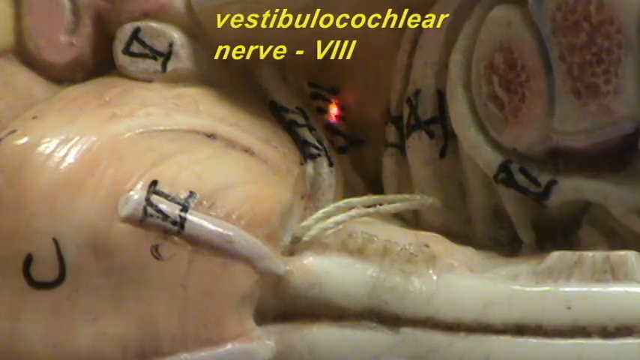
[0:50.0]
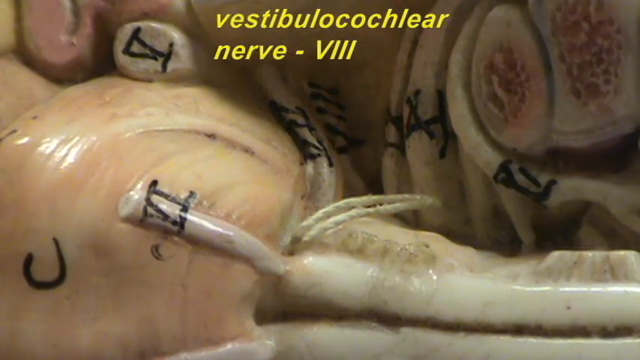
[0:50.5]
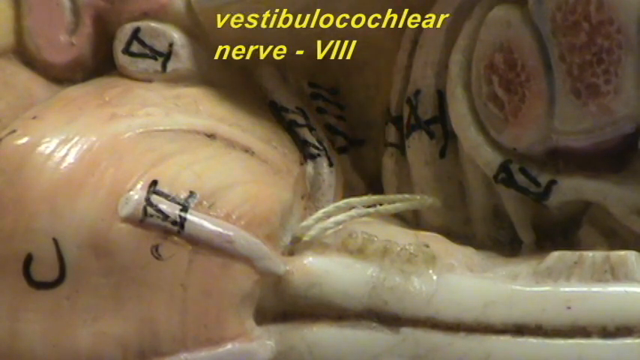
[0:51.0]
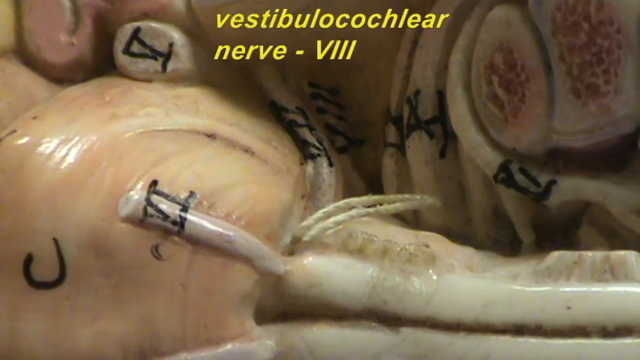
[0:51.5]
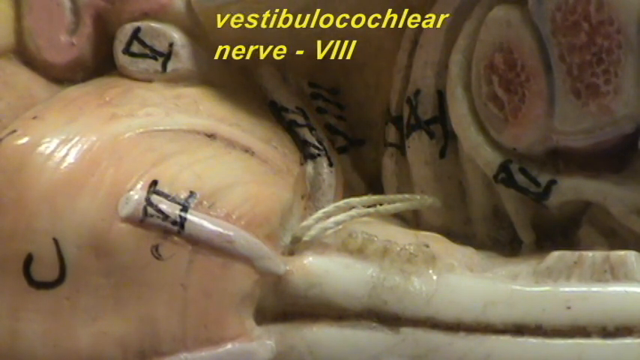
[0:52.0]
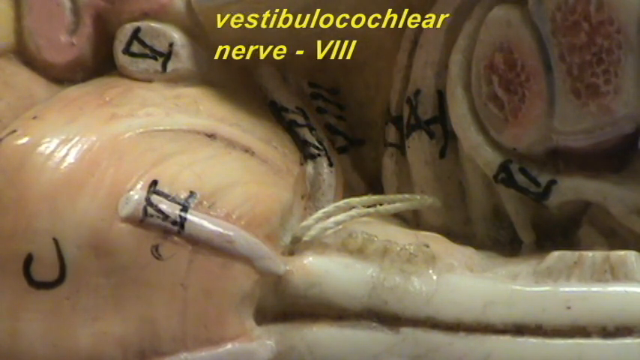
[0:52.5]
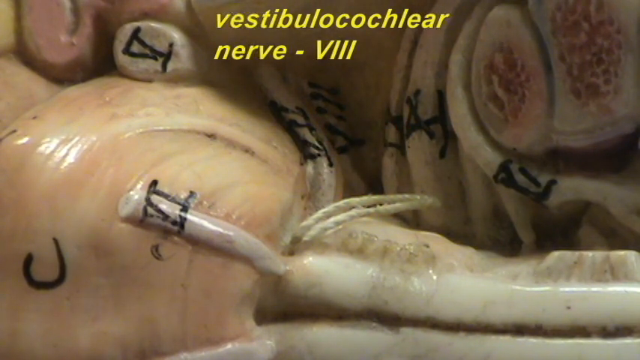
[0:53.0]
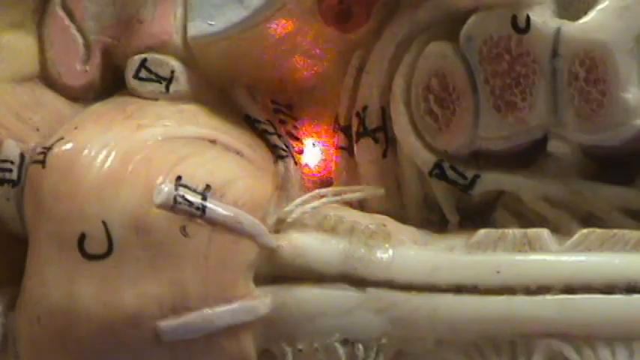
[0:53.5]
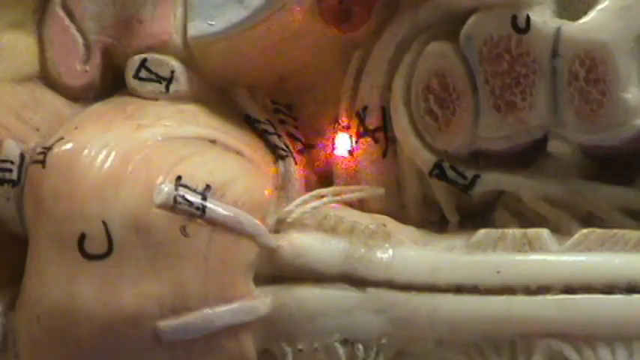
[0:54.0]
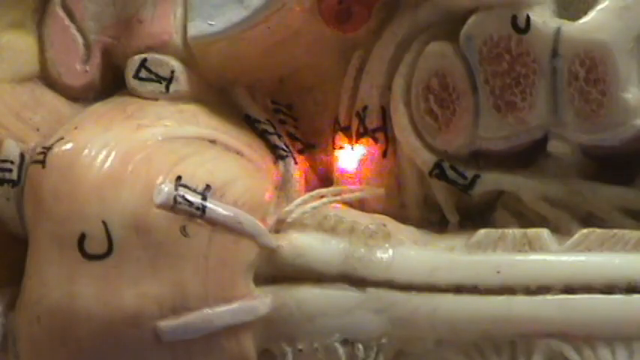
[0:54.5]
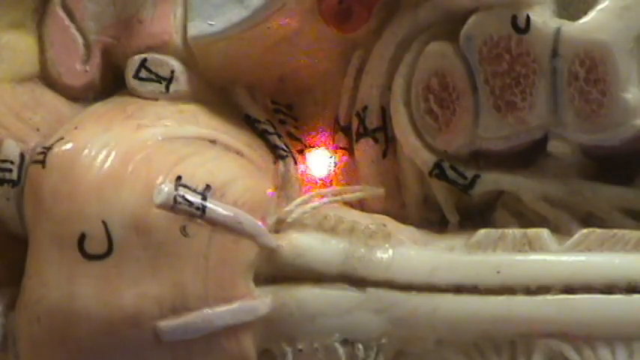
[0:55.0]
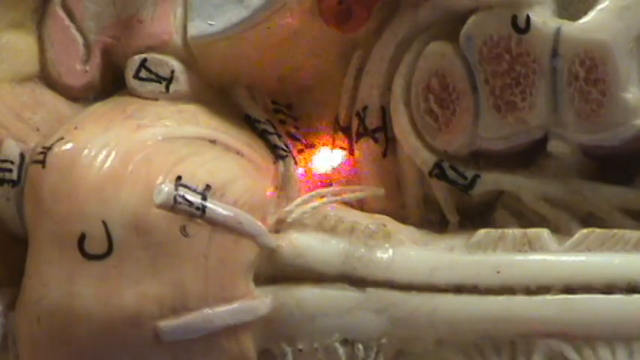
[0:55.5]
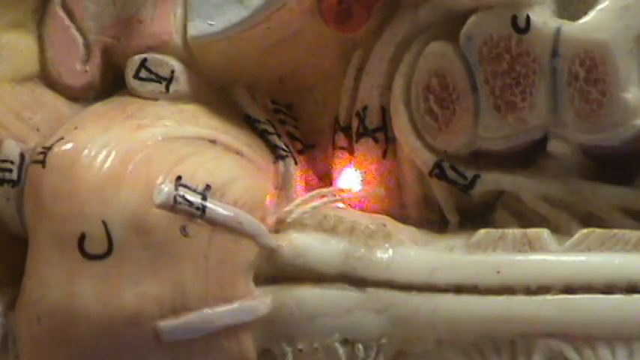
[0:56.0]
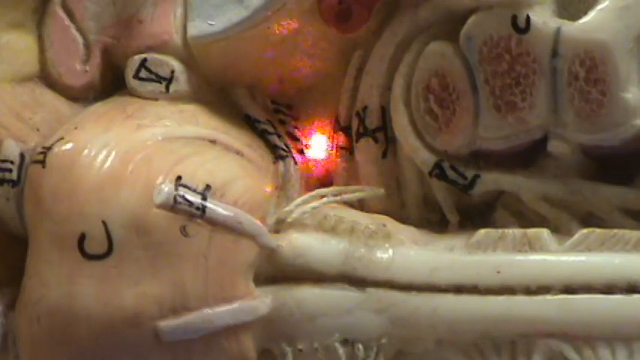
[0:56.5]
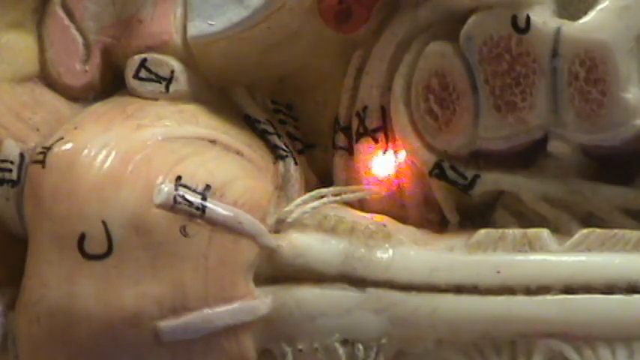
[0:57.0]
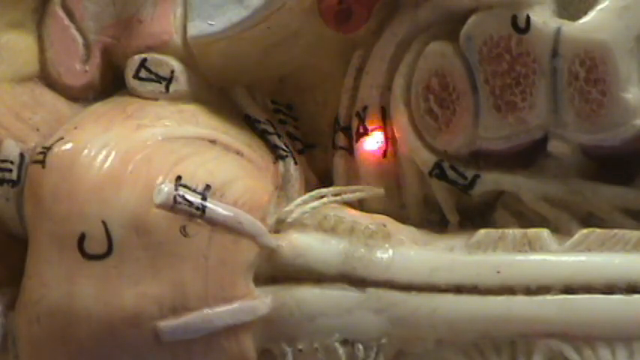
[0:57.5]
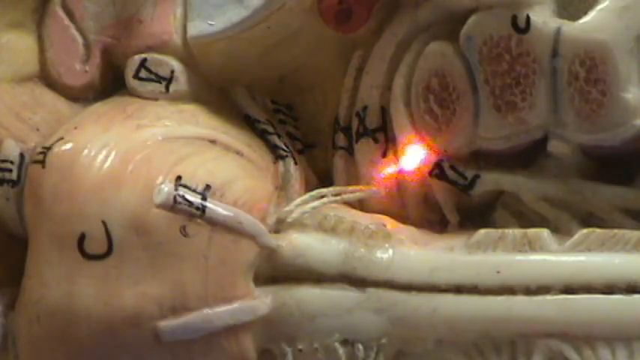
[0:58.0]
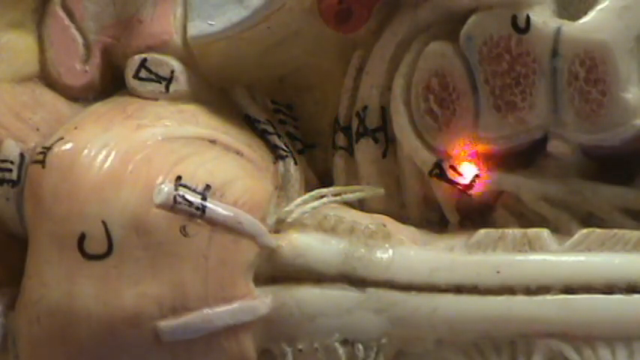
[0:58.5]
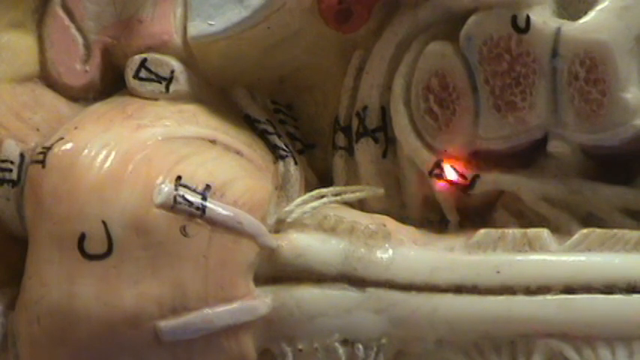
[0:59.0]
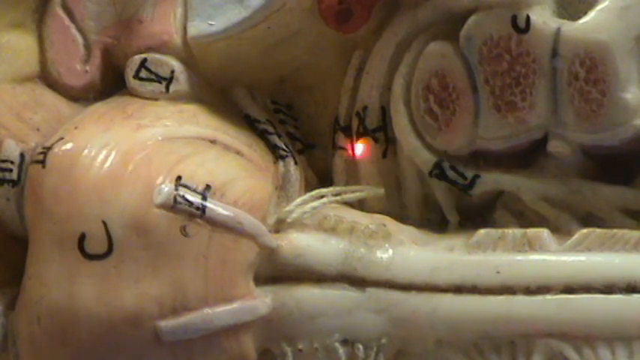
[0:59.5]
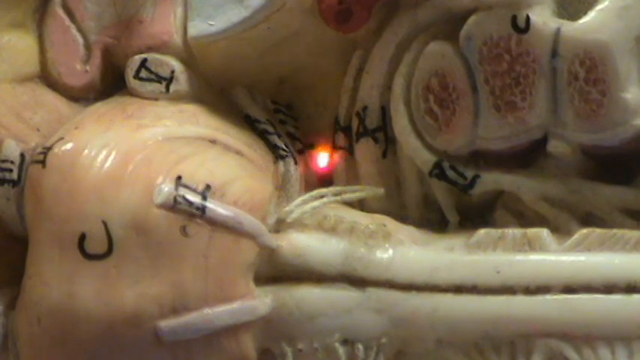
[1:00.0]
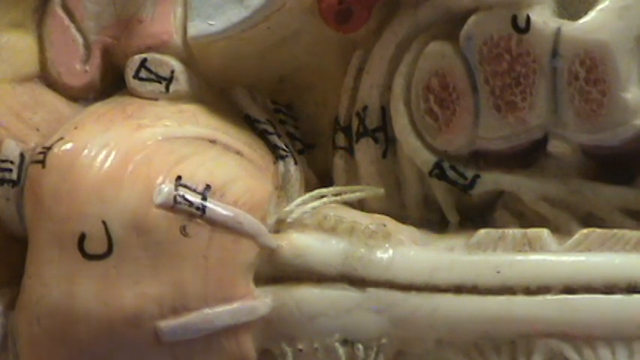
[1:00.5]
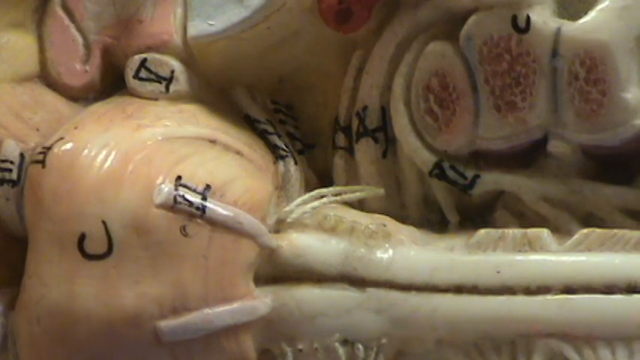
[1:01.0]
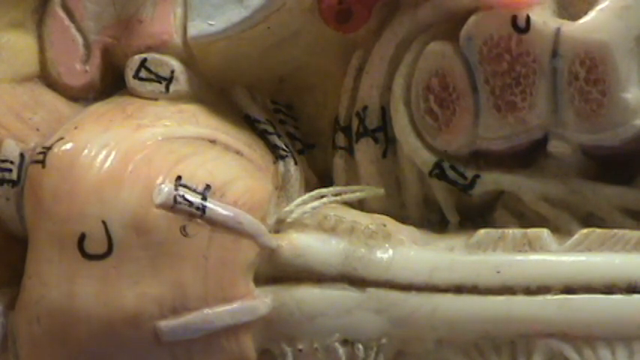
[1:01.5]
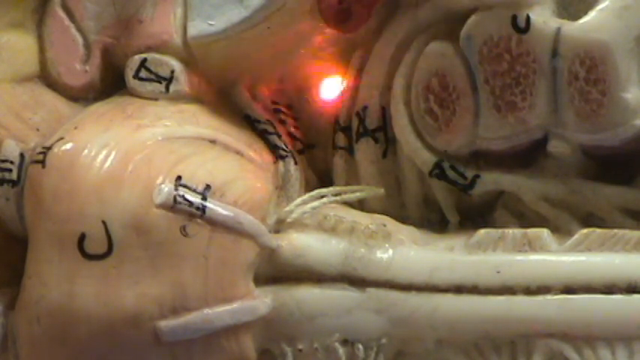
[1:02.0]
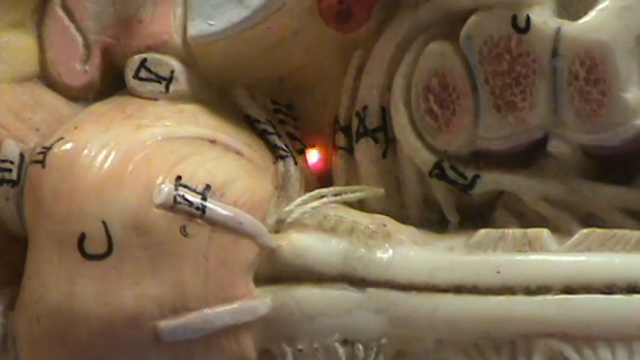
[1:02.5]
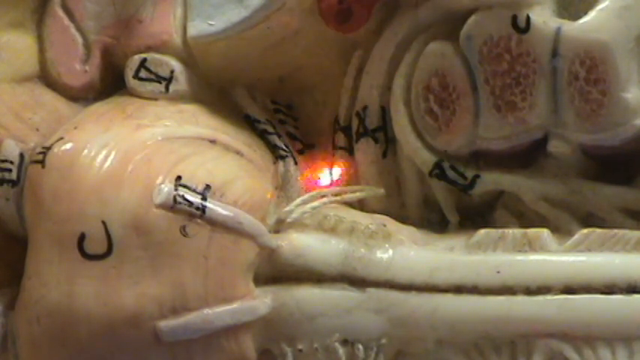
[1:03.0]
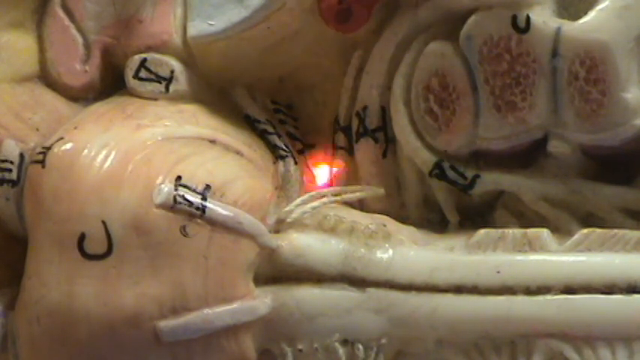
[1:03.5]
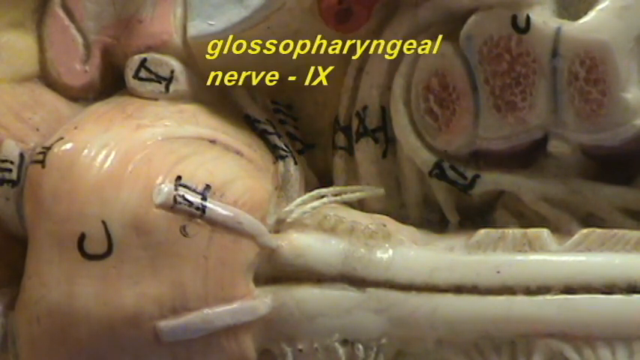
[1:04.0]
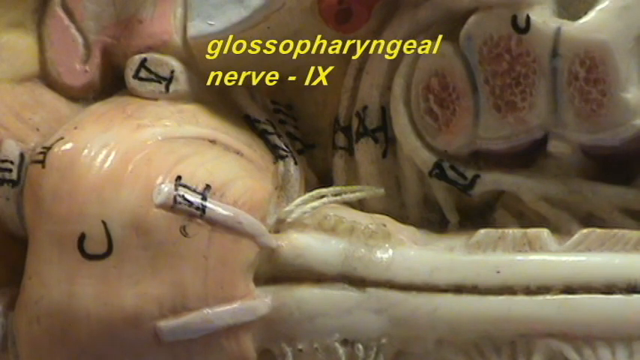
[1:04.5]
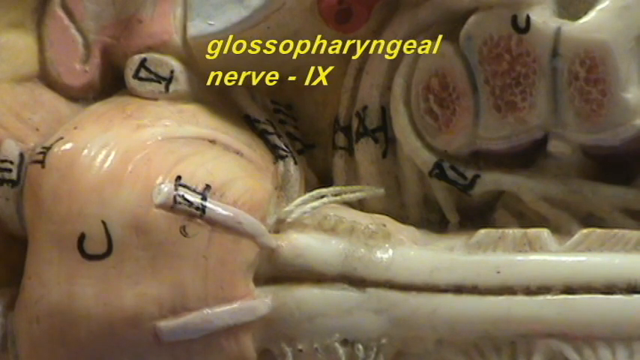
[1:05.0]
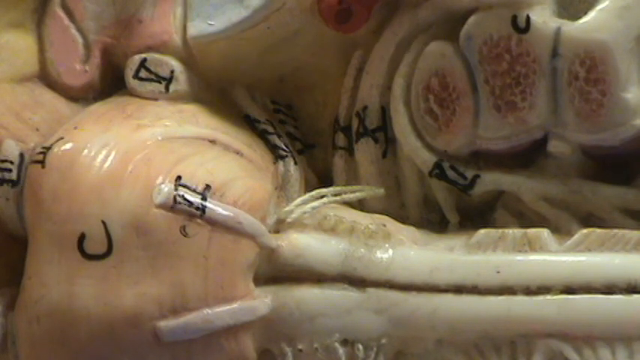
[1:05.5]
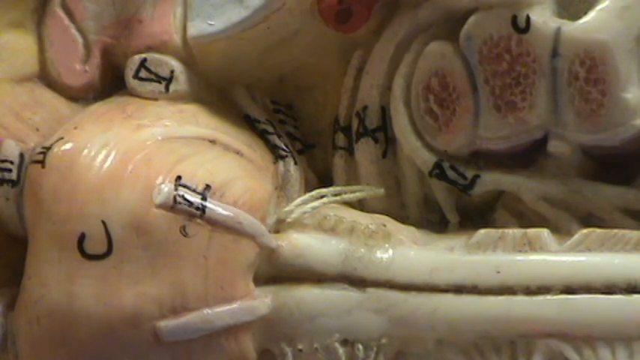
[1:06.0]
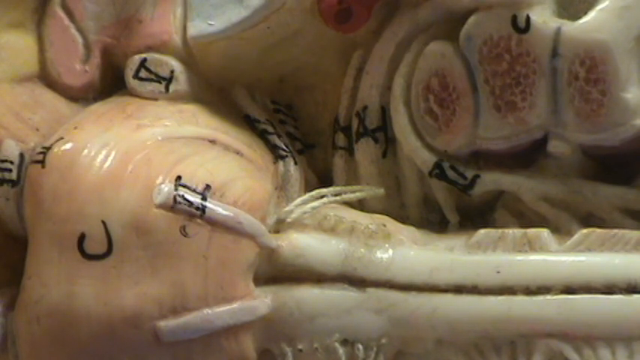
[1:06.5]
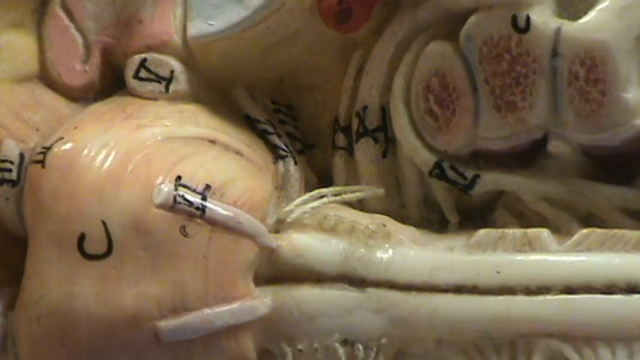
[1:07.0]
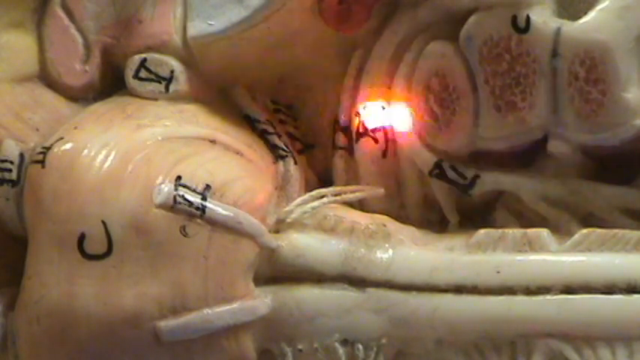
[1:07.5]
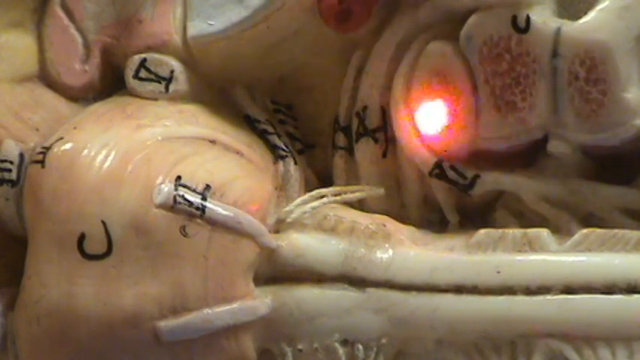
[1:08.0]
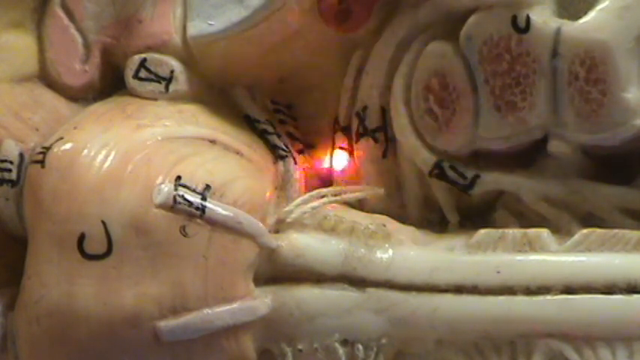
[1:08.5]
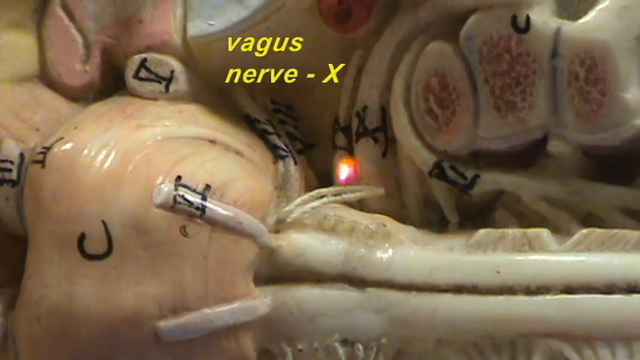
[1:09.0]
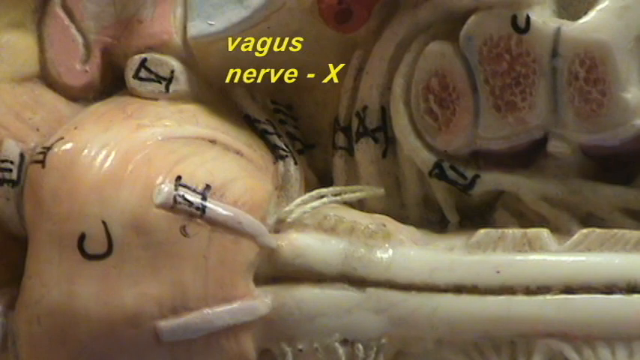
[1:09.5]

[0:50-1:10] Text at the top of the screen reads "vestibulocochlear nerve, VIII." The video shows the area around the spinal cord on a realistic model of the human body, apparently used for instruction. A red laser pointer points to a specific area right next to the spinal cord, which looks very close to the medulla, and moves around quickly as the person points out that area. Another label then appears on screen: "Glossopharyngeal nerve, IX."